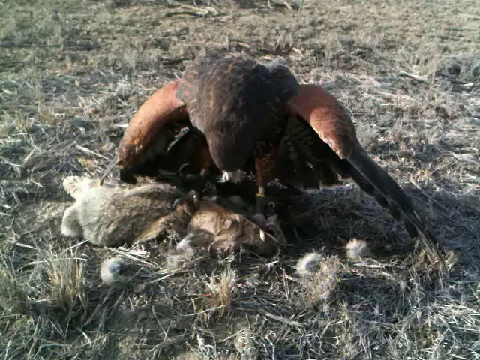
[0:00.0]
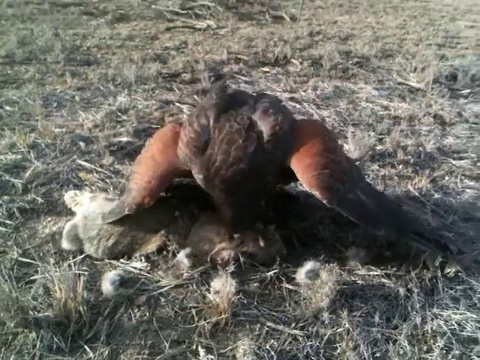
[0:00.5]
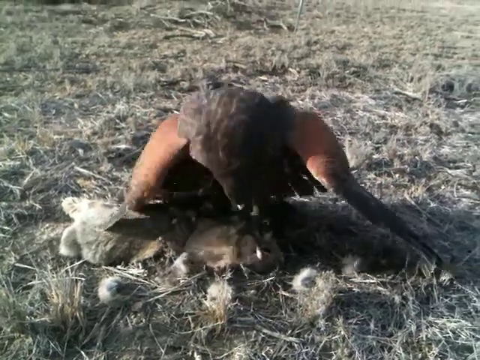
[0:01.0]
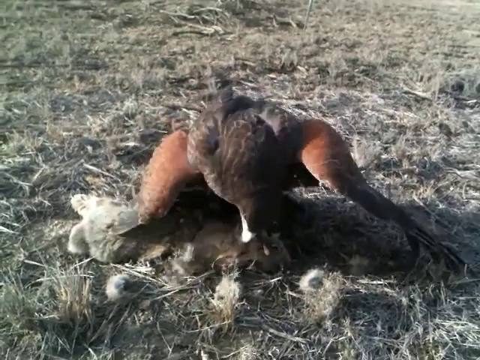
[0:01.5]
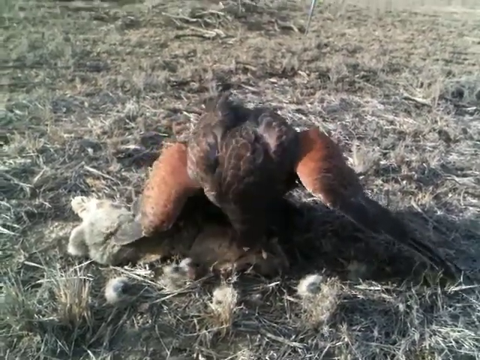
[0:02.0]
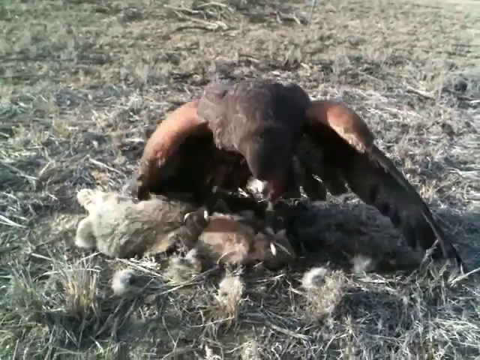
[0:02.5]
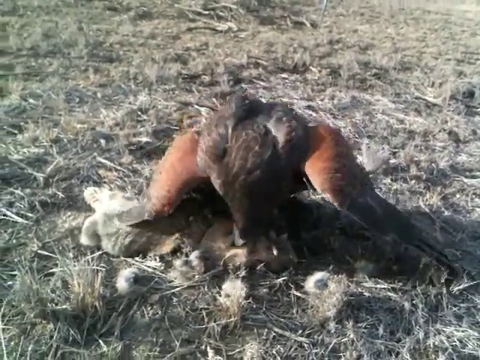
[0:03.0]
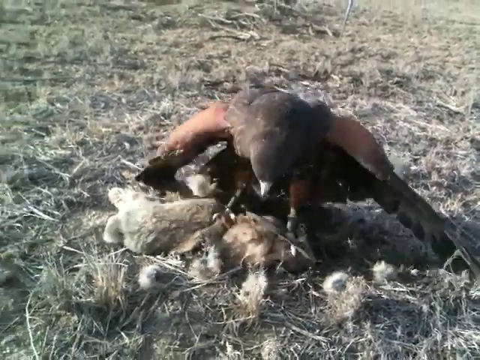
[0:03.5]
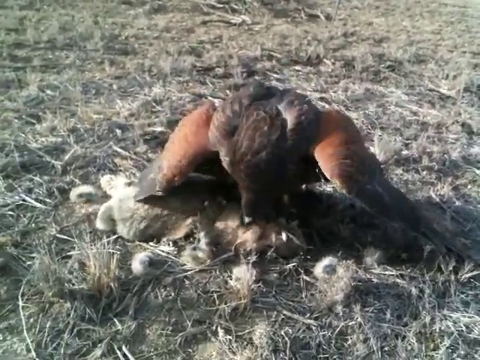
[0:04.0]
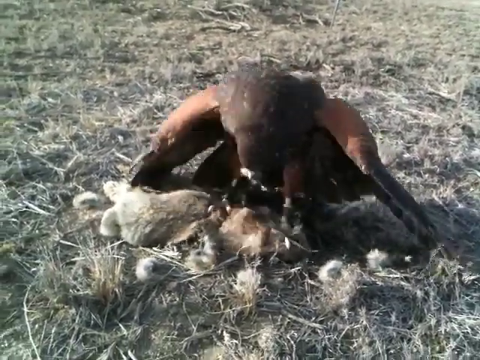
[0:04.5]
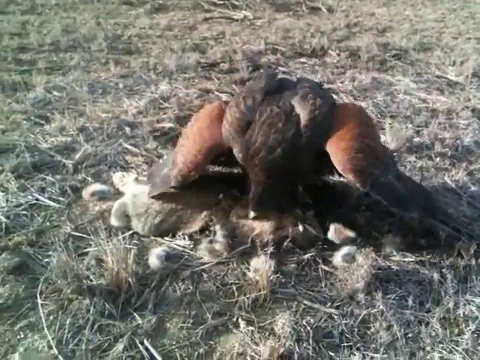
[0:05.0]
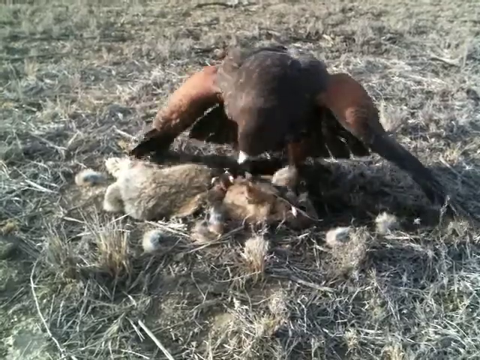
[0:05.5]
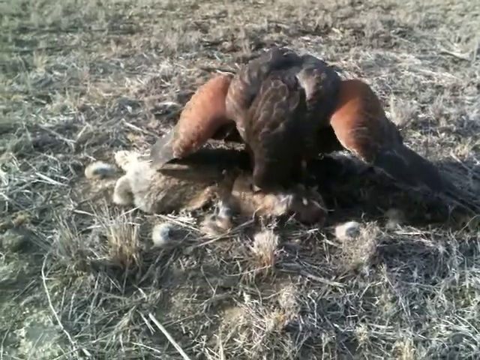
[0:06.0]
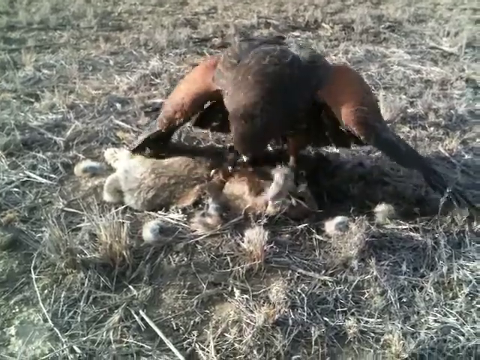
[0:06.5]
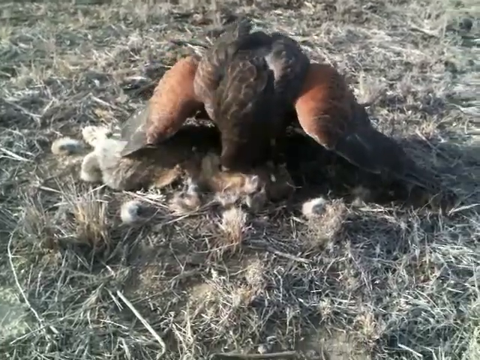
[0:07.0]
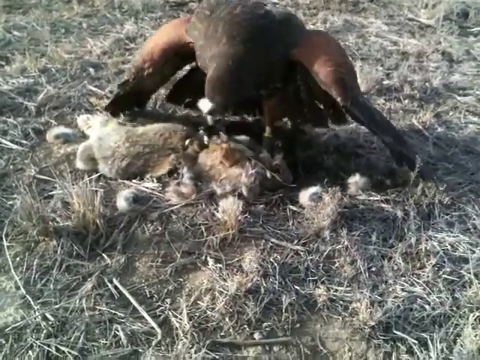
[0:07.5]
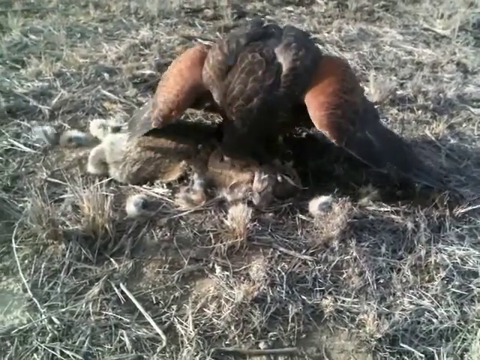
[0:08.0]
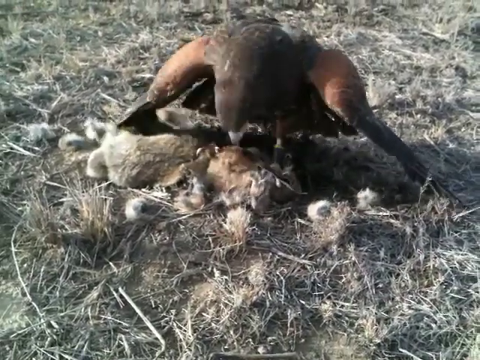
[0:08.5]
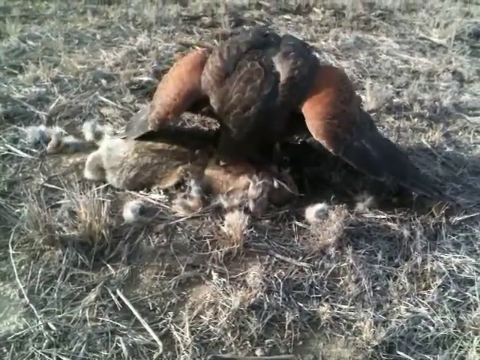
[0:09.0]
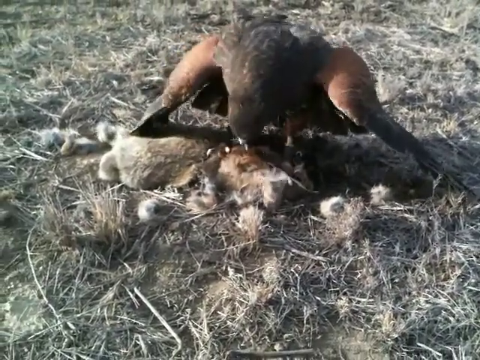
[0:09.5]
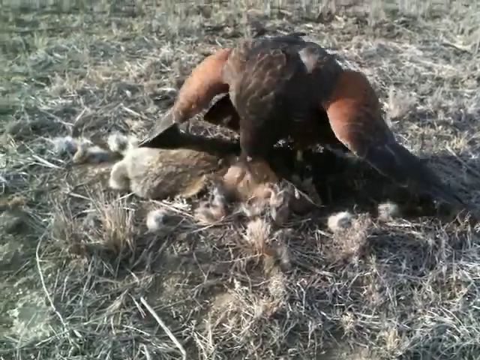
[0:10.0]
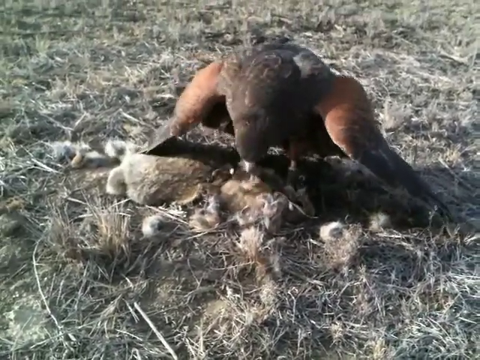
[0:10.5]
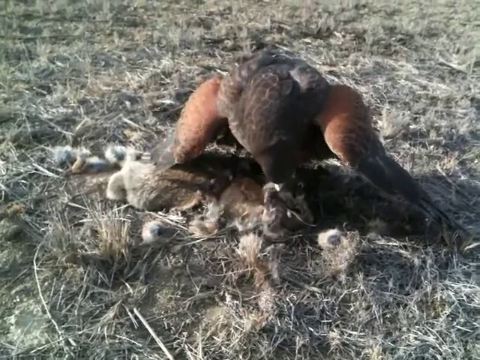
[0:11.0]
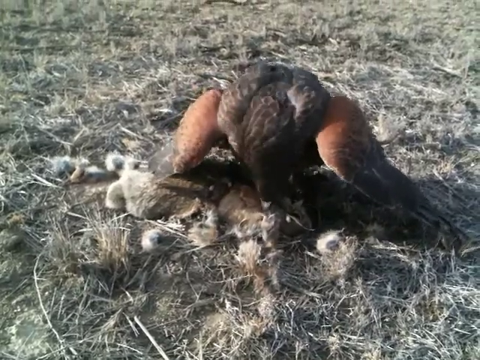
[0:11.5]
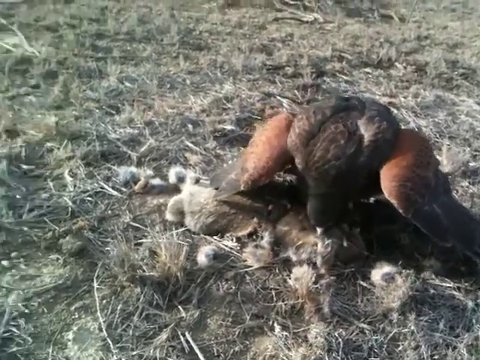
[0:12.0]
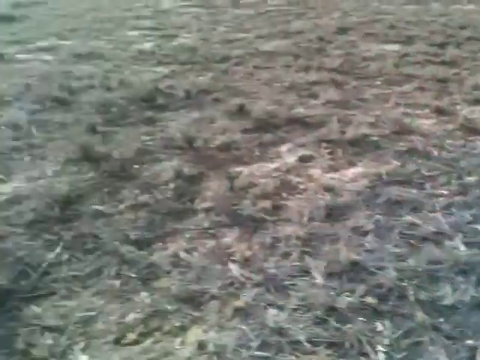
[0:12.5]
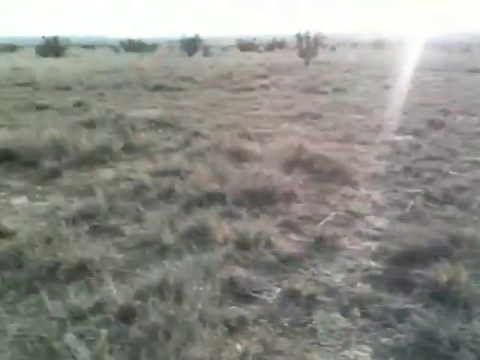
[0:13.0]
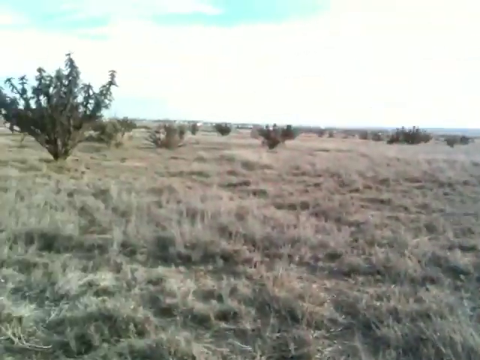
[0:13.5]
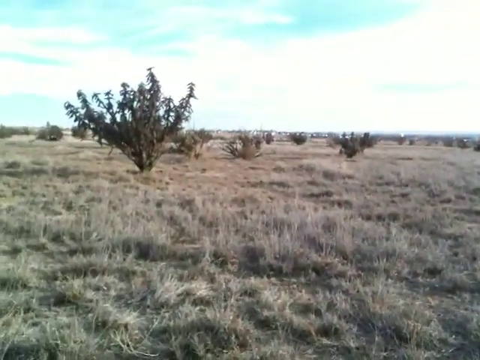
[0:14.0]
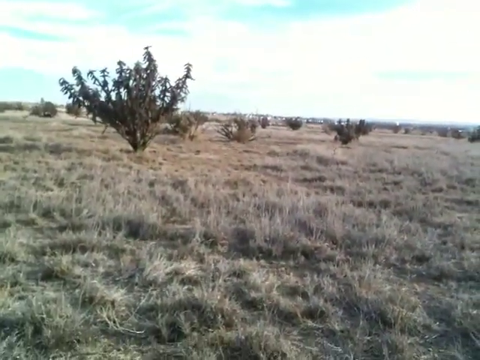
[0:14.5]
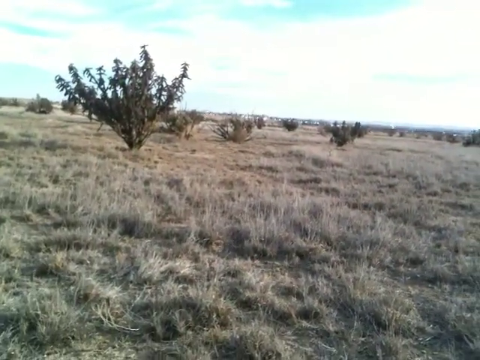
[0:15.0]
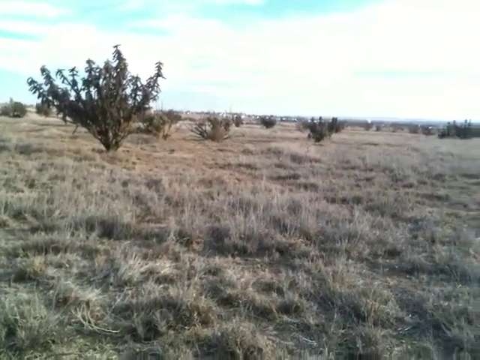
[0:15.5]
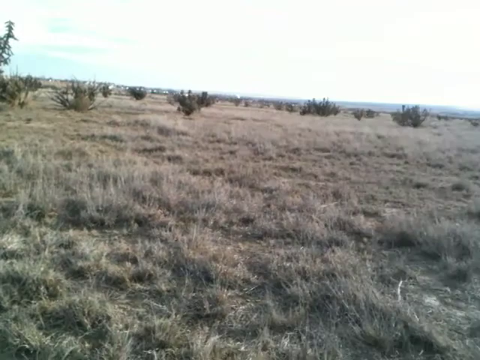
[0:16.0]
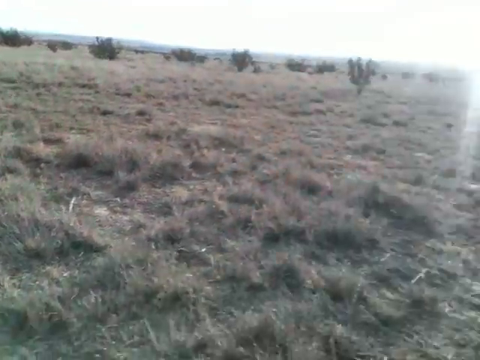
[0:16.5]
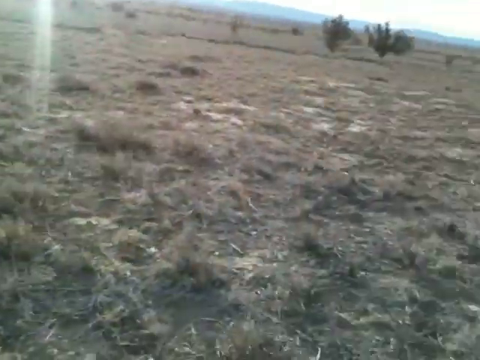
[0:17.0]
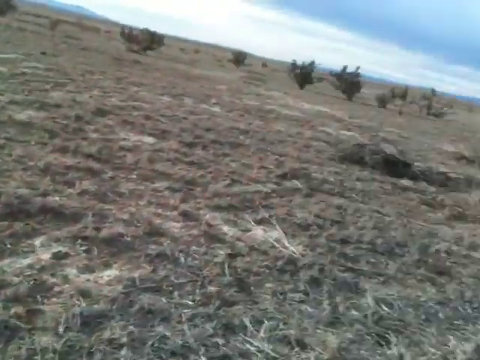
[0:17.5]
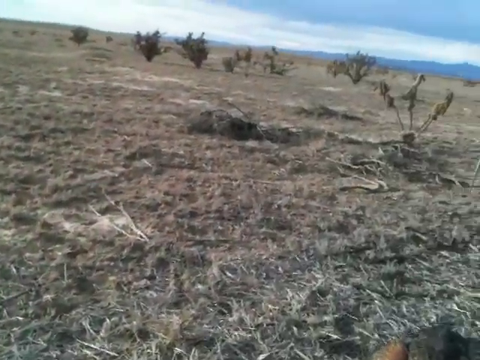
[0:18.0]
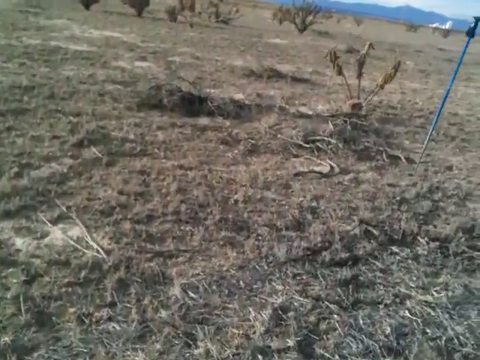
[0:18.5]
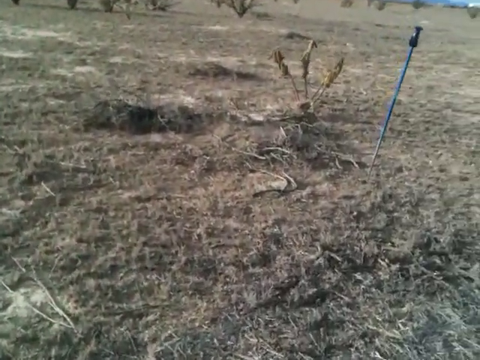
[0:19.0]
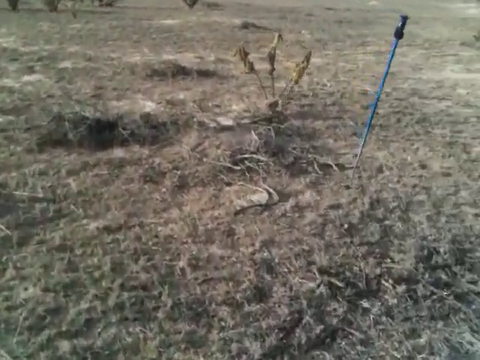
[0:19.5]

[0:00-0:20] A black and brown bird is eating an animal that looks like a hare. Holding the animal with its feet, the bird removes the hair from it and puts the hair on the side. The hare is dead, and as the bird removes the hair, it shakes its head to remove hair stuck on its beak. The camera is not steady and shakes as it shows the bird. The camera then moves away from the bird to show trees that are far apart from each other and brown grass. In the distance there is no civilization, just wilderness, and silhouettes of mountains can be seen. The camera then moves to show a blue rod with a black handle stuck in the ground.